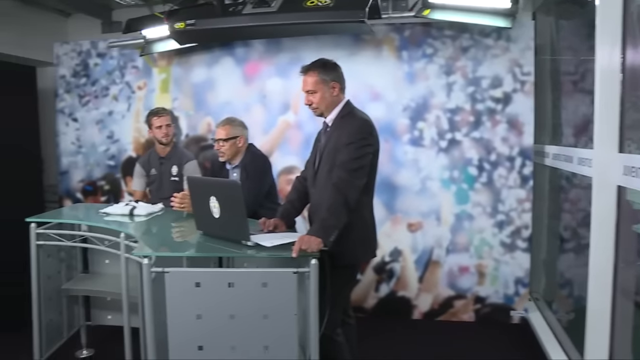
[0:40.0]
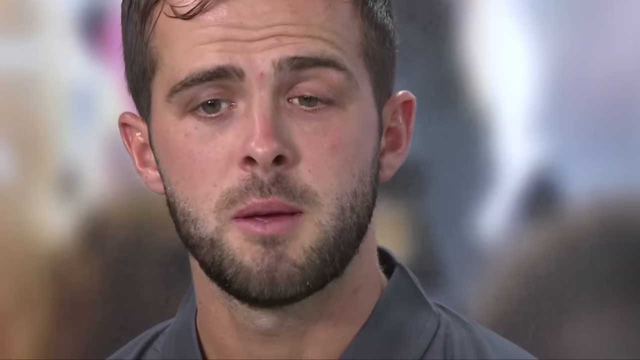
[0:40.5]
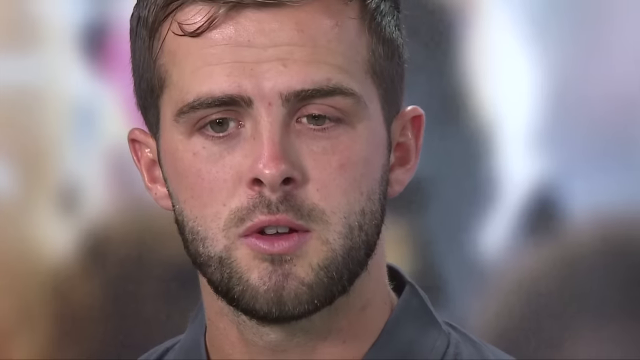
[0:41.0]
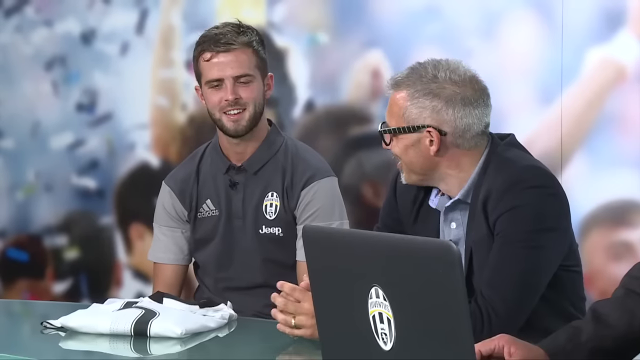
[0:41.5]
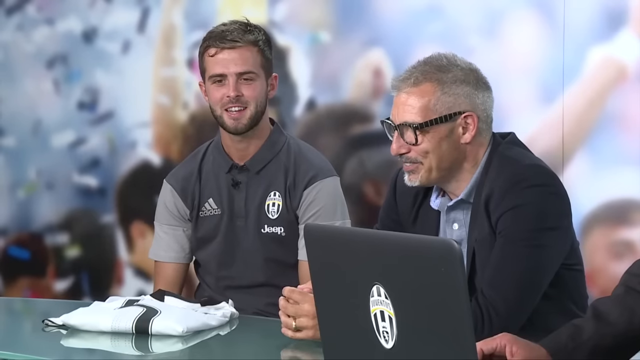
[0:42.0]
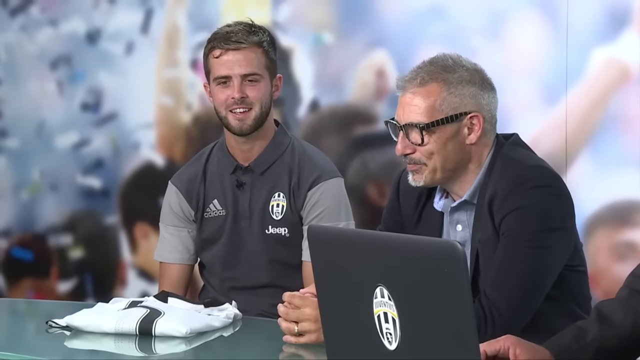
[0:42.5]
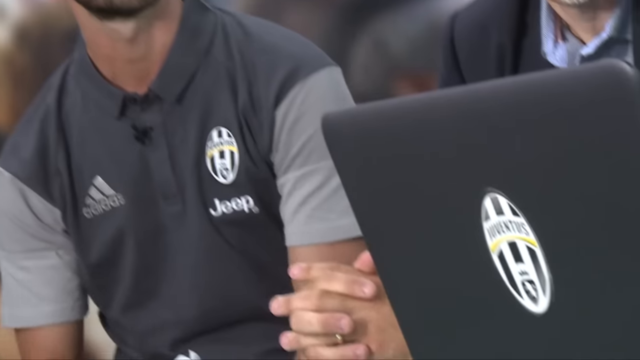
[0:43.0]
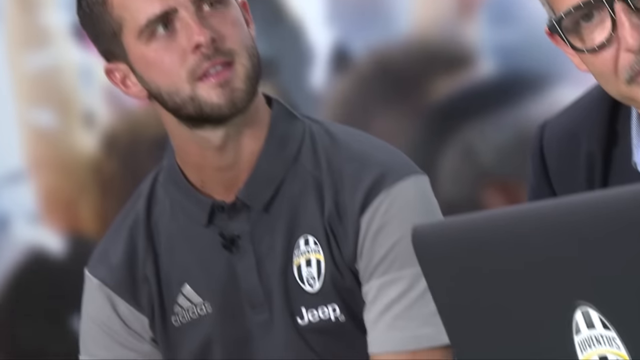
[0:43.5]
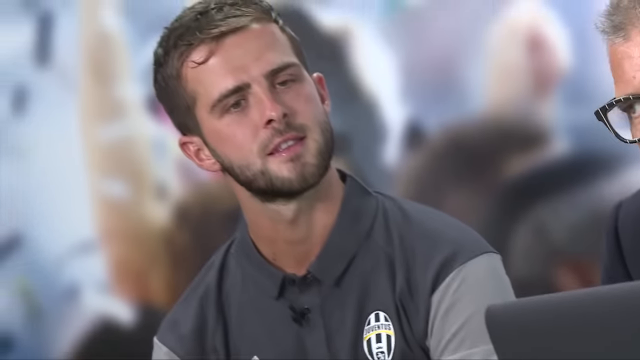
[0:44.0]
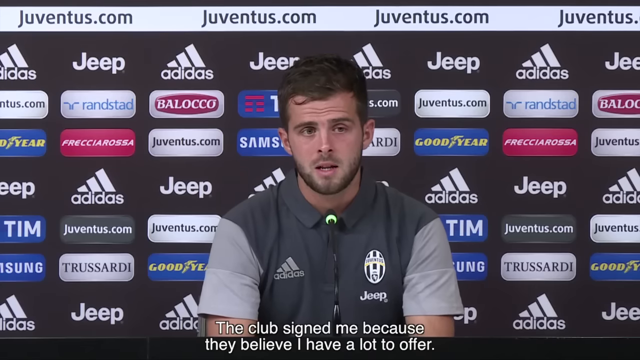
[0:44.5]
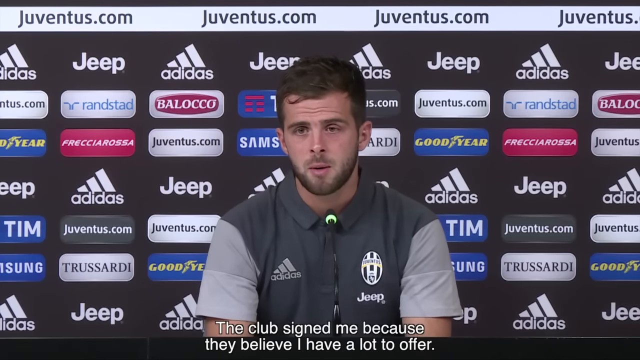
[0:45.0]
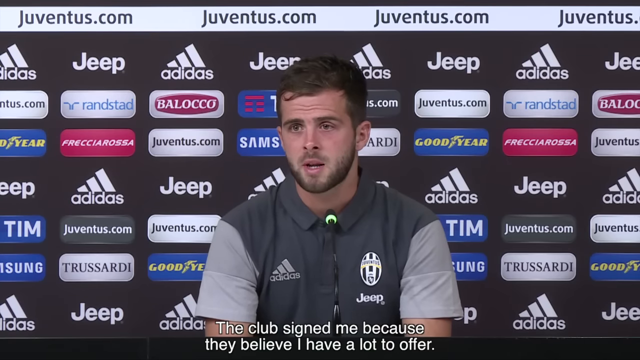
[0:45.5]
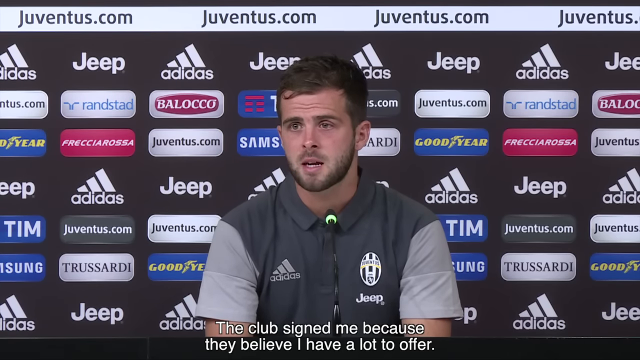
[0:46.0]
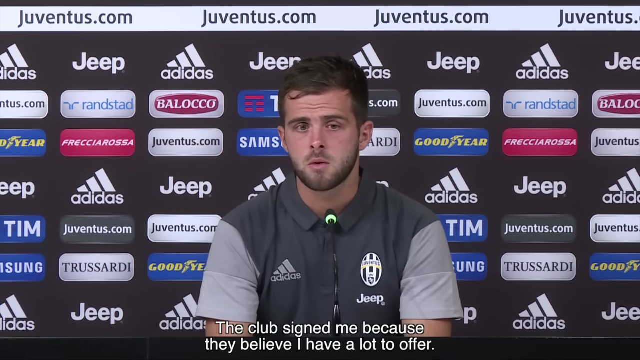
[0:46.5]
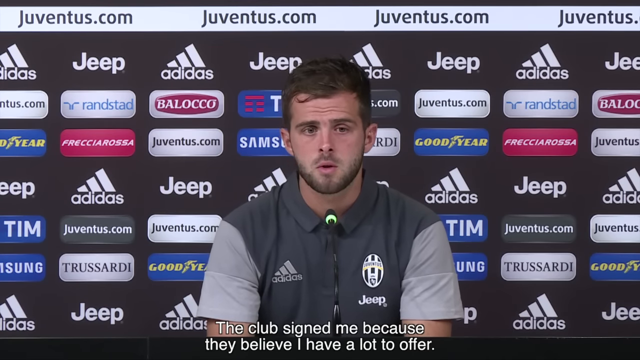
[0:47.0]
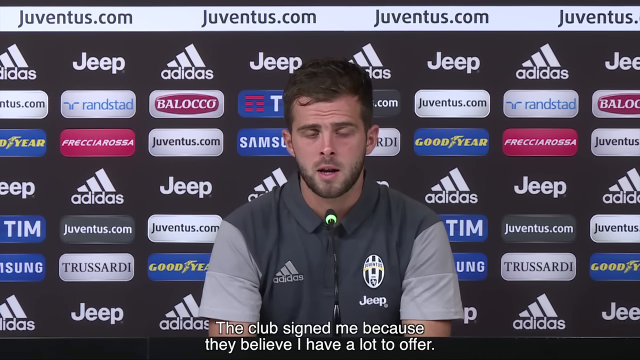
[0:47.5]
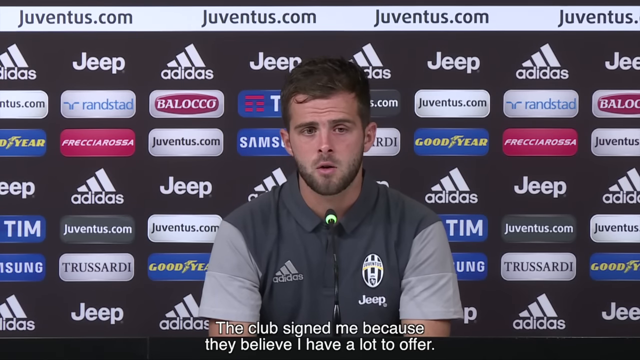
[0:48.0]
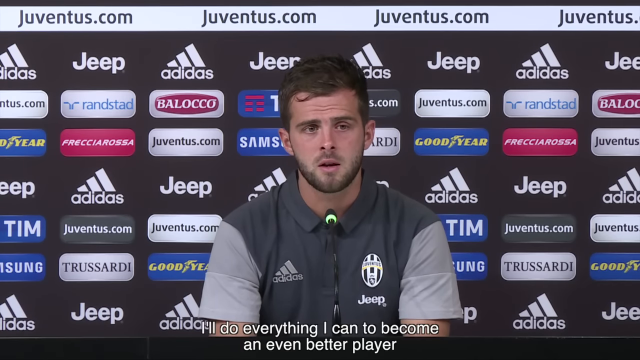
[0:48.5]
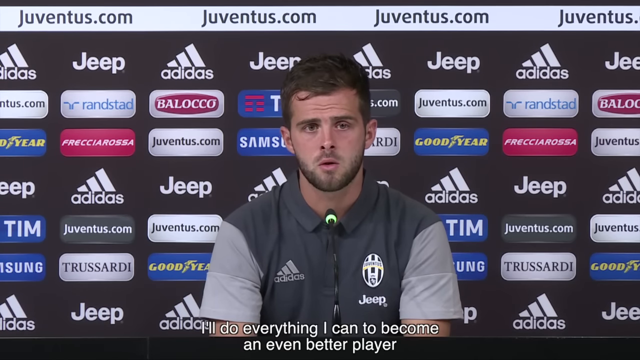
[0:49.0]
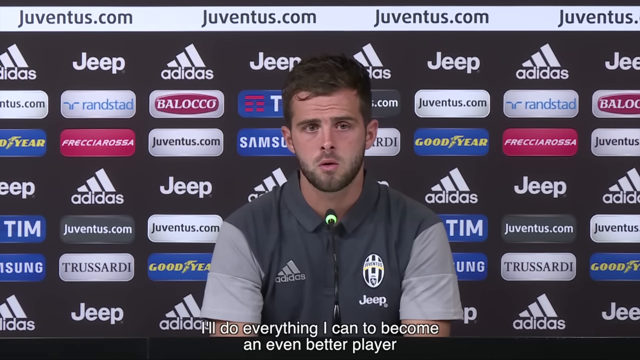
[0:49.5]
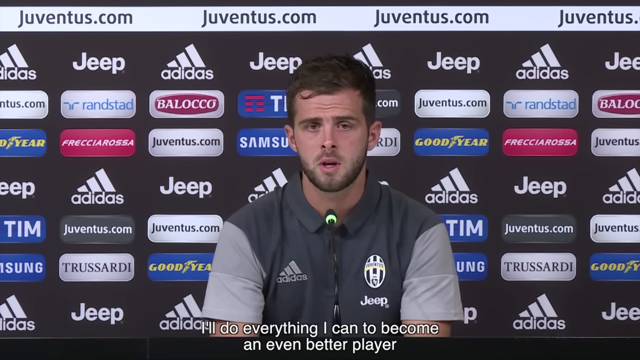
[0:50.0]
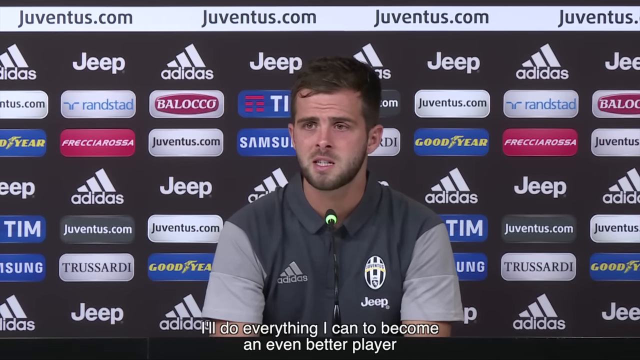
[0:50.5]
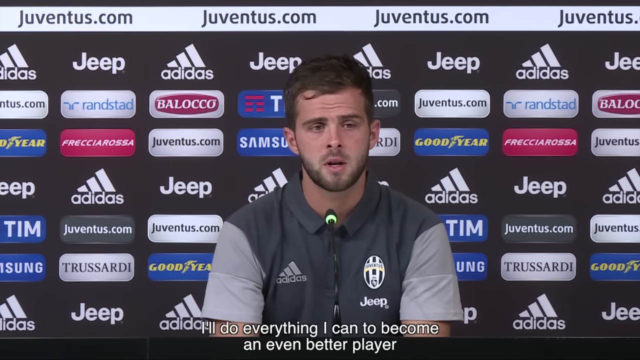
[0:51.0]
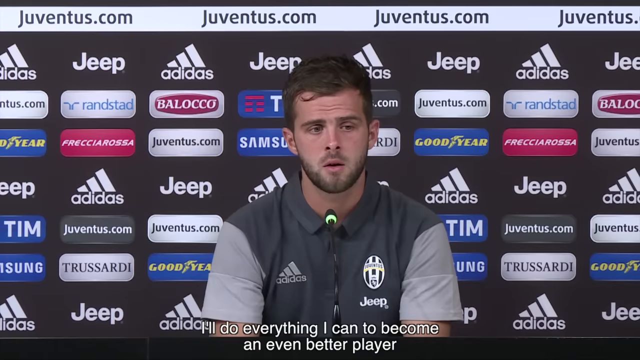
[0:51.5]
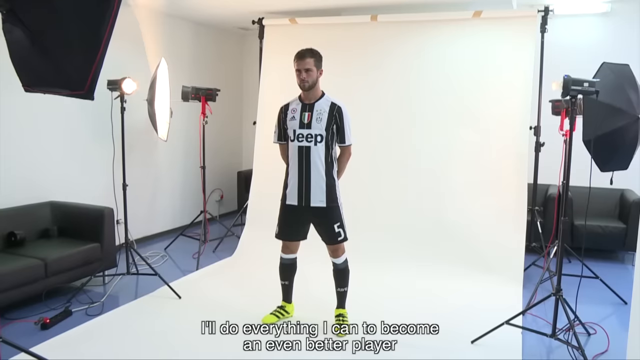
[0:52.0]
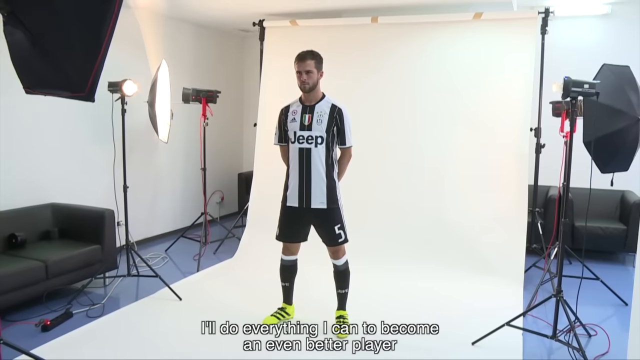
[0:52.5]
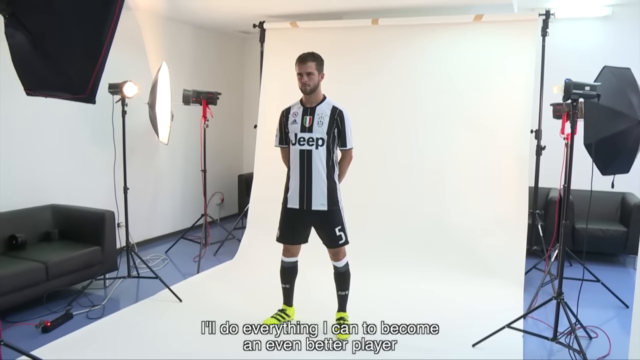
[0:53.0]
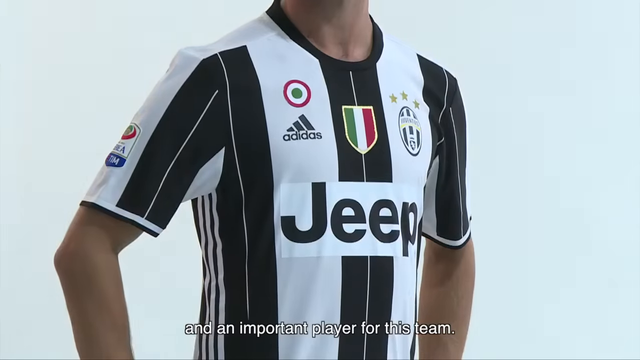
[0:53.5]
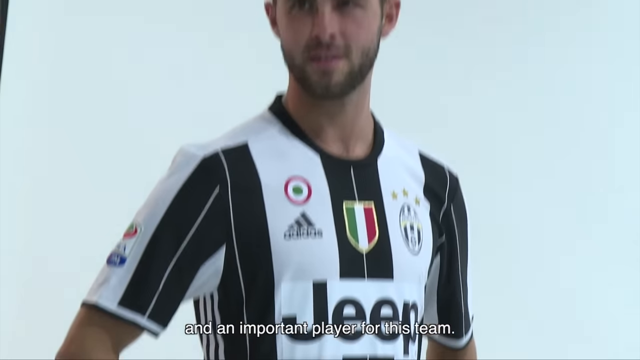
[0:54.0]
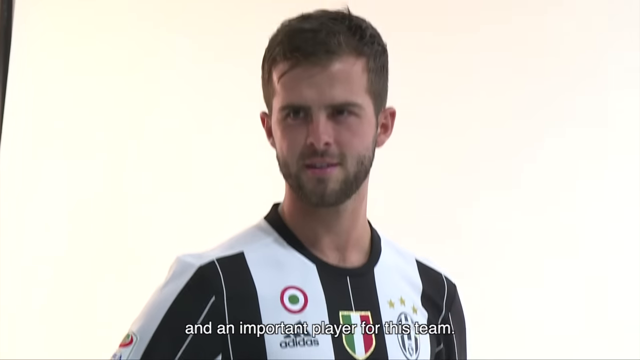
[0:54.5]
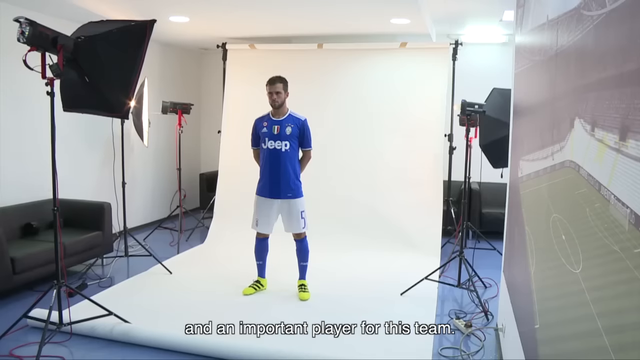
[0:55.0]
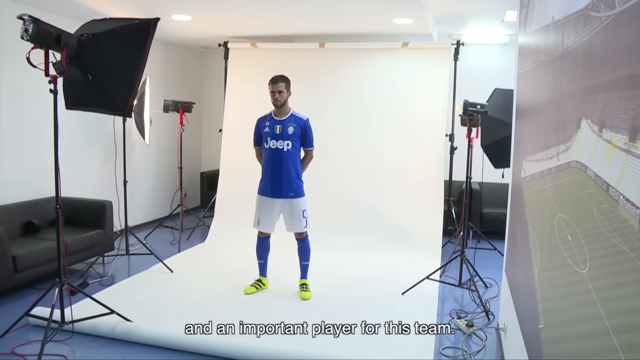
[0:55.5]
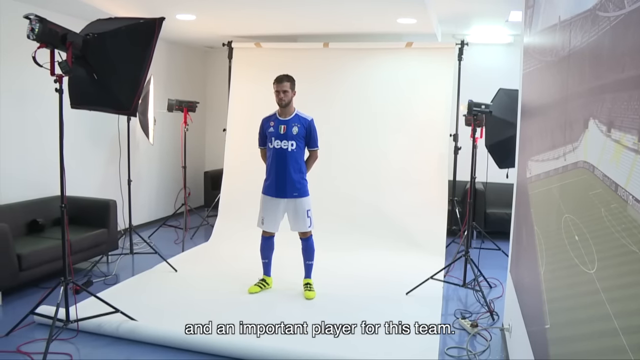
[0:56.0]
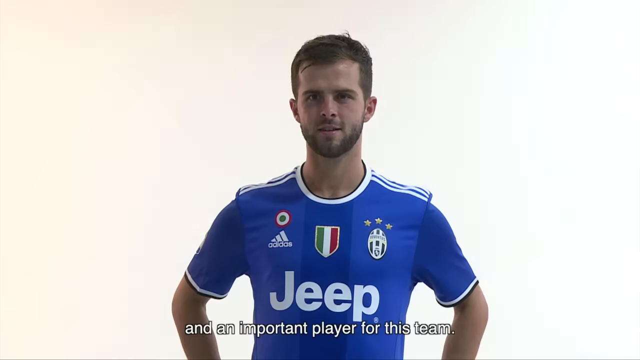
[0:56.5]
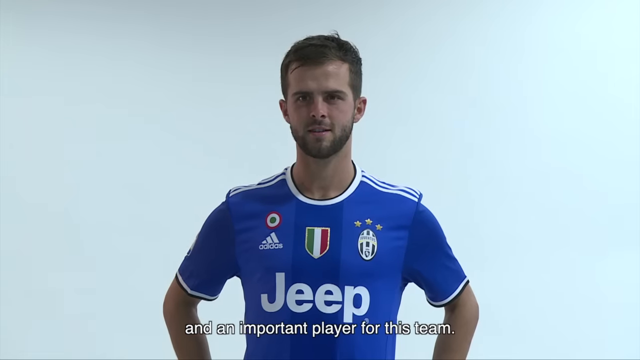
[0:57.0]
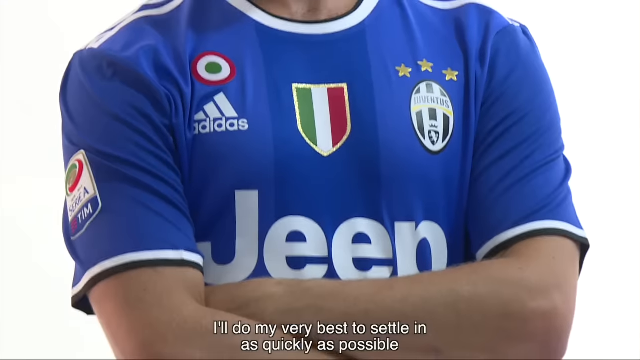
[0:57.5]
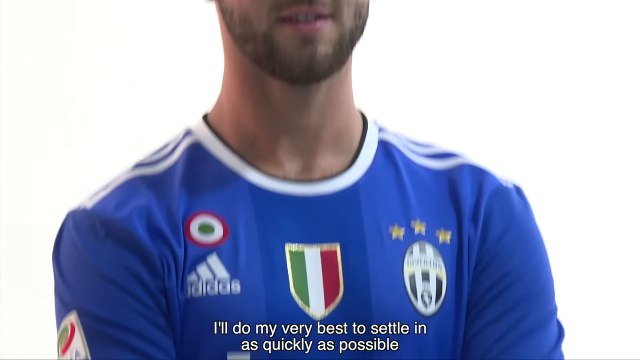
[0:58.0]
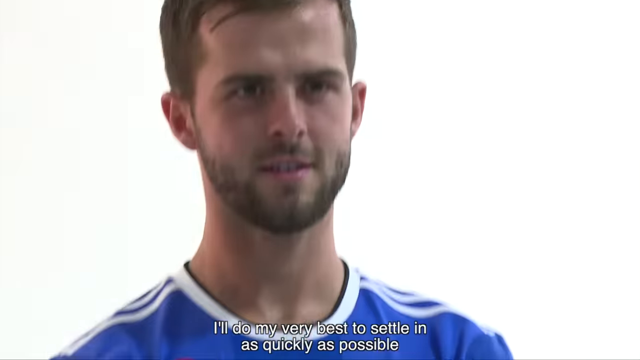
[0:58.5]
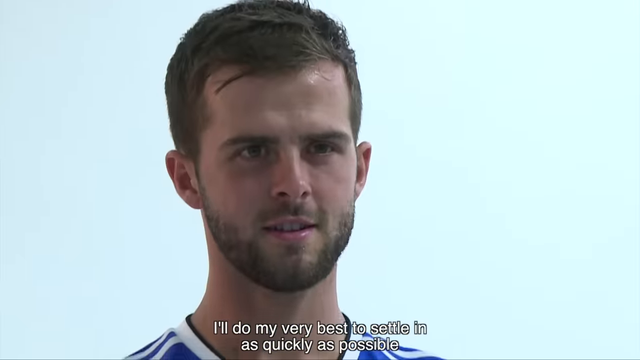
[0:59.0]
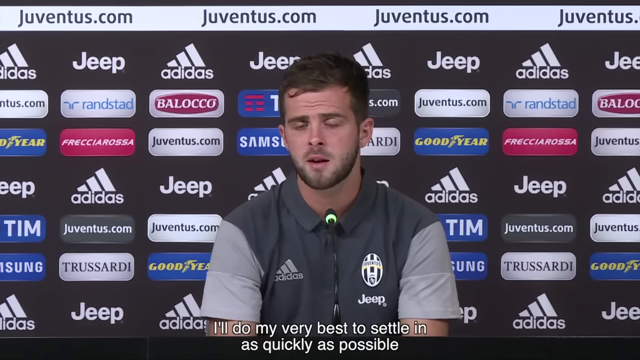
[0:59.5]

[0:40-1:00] The man with black hair and a black beard is speaking, with the camera very close to his face. After several seconds, the camera pans out to show another man sitting next to the soccer player, wearing a black suit coat and a blue collared shirt, with short gray hair and thick-rimmed black glasses; he has a computer in front of him. More footage follows of the first man speaking to reporters sitting at the press conference. Next, the man does a photo shoot in front of a white background, wearing different team jerseys: first a black jersey, then a blue jersey with a large Jeep logo on it.